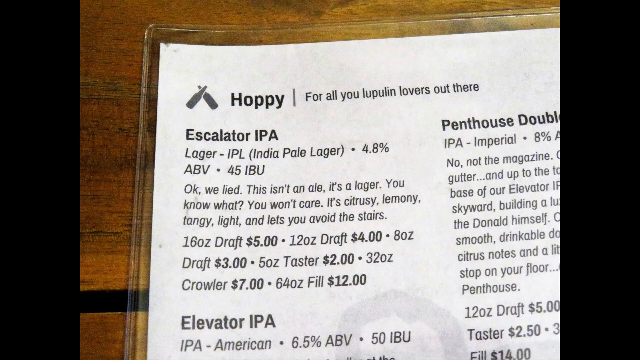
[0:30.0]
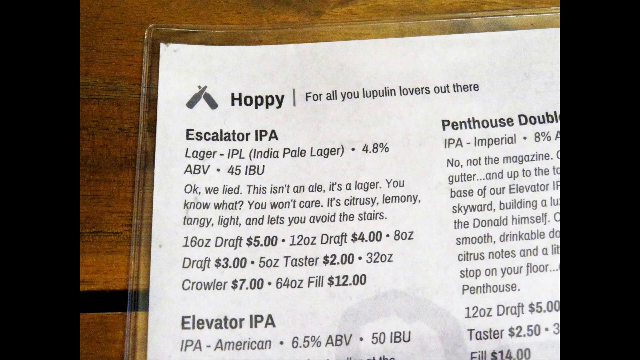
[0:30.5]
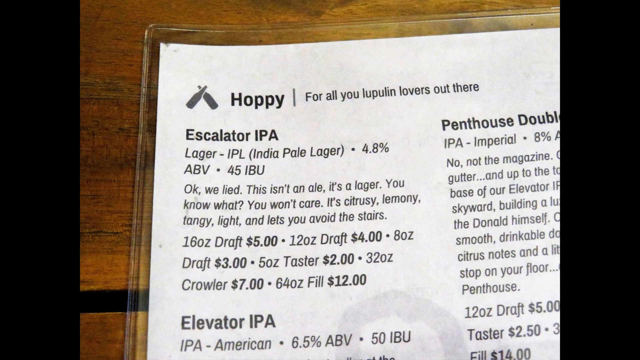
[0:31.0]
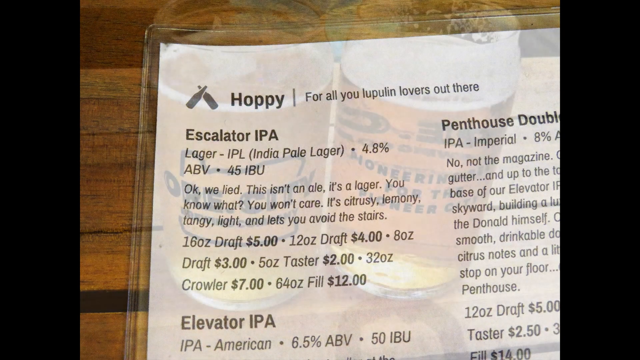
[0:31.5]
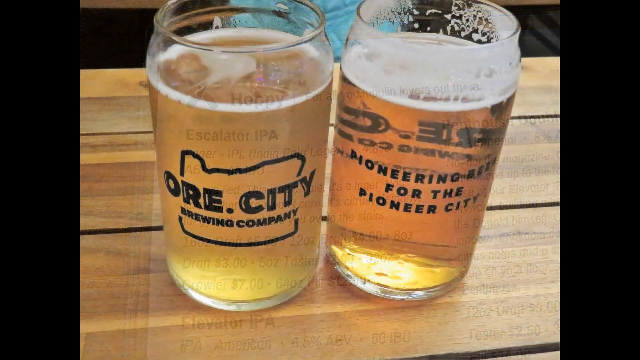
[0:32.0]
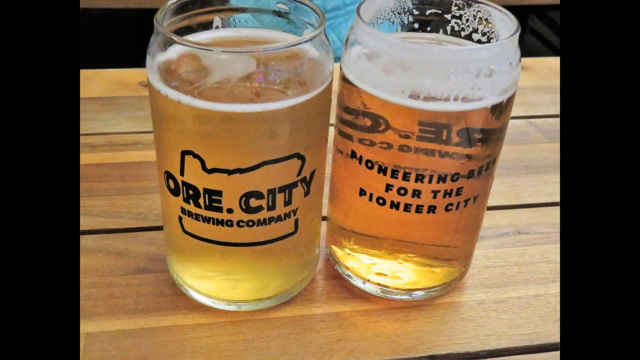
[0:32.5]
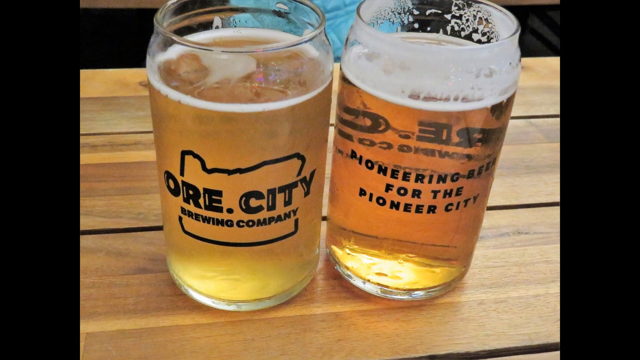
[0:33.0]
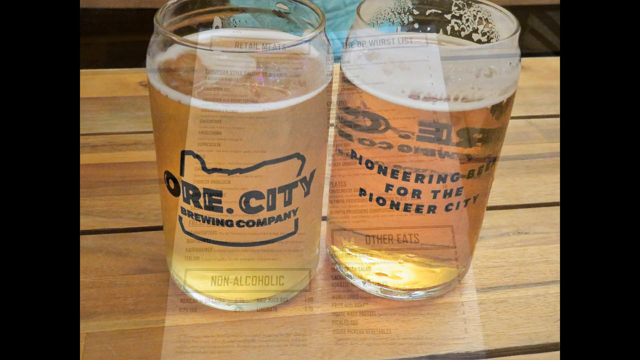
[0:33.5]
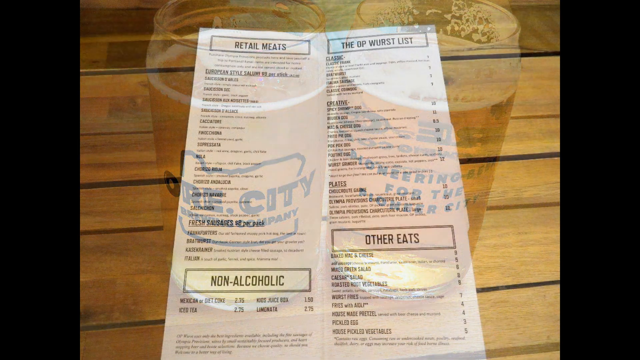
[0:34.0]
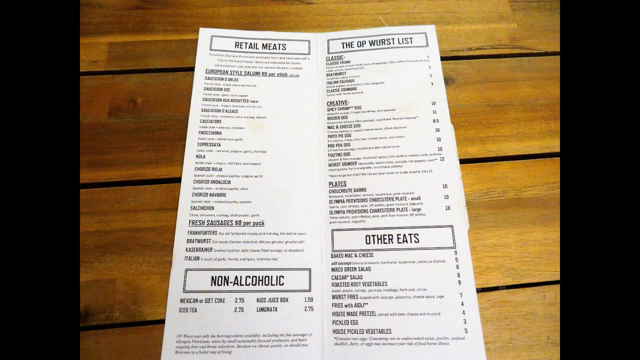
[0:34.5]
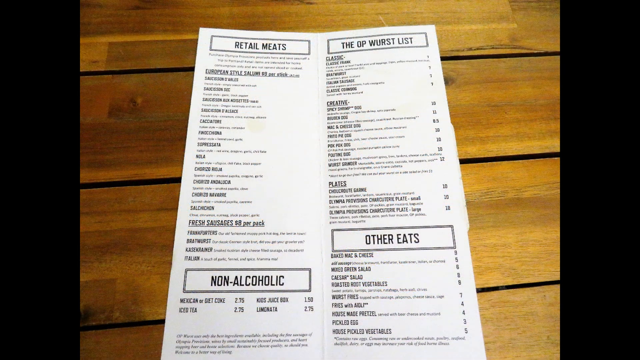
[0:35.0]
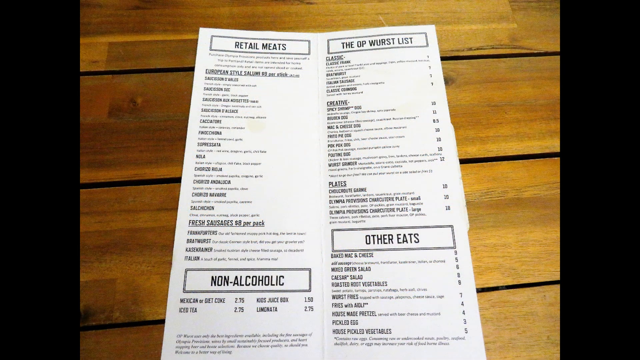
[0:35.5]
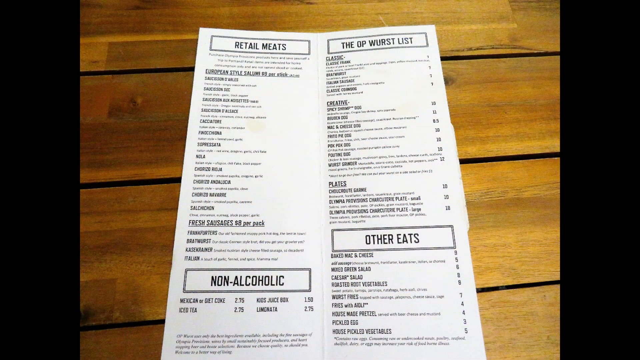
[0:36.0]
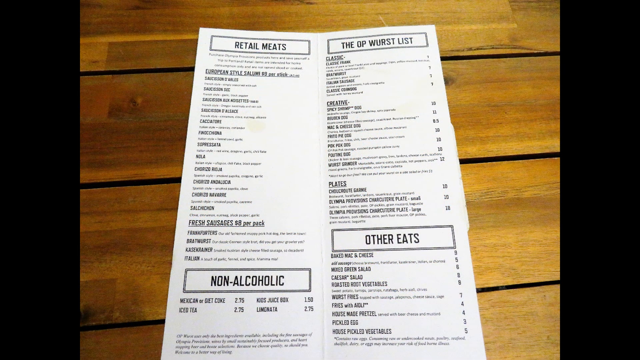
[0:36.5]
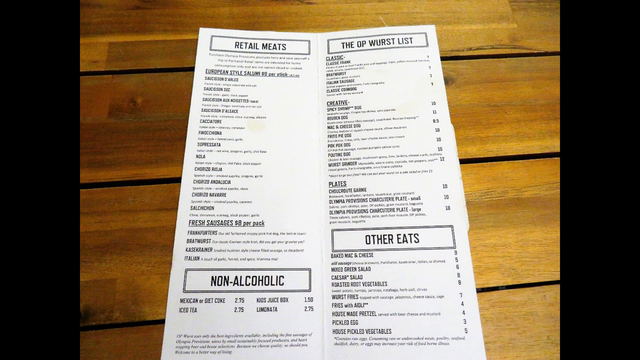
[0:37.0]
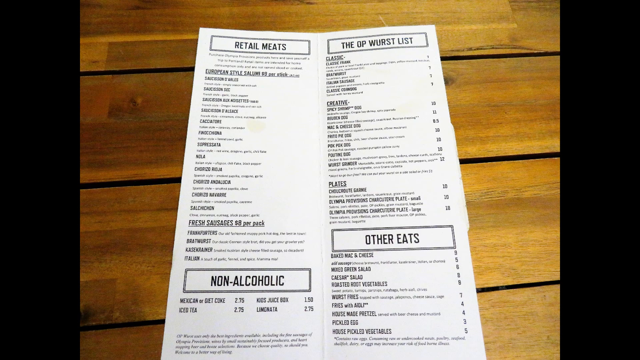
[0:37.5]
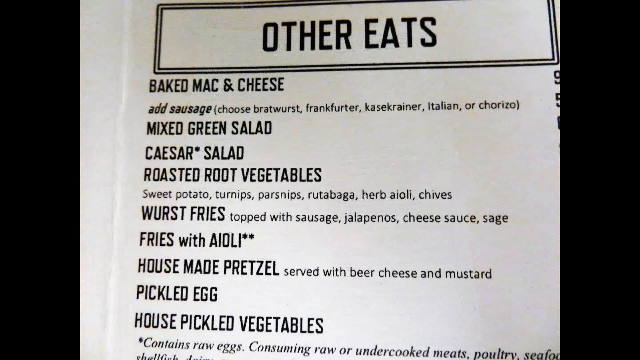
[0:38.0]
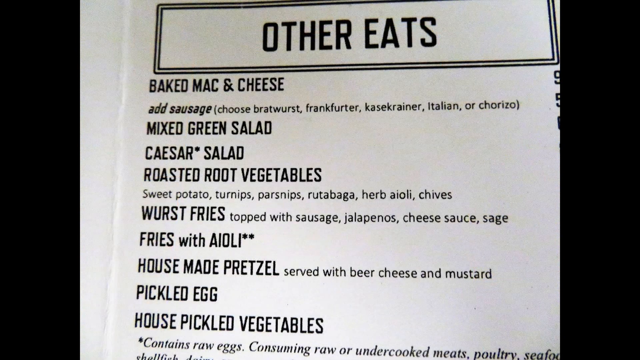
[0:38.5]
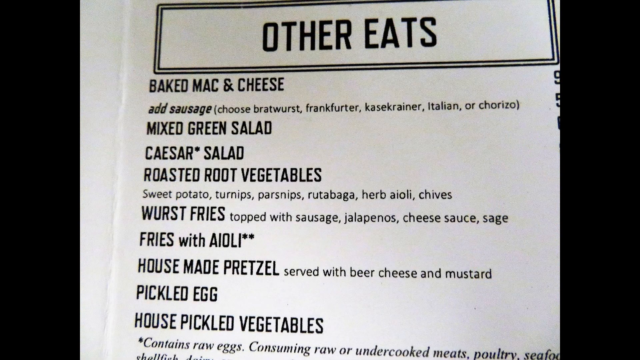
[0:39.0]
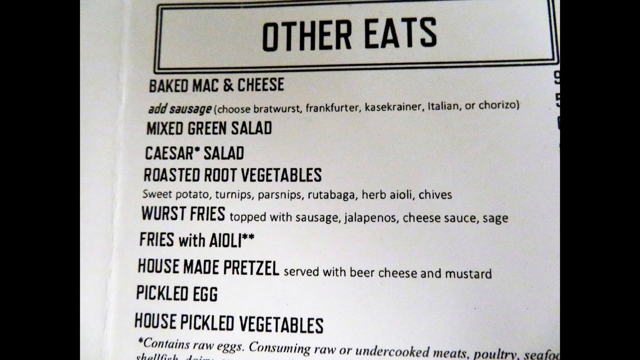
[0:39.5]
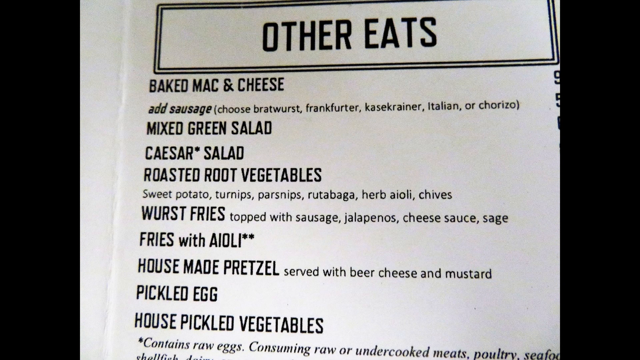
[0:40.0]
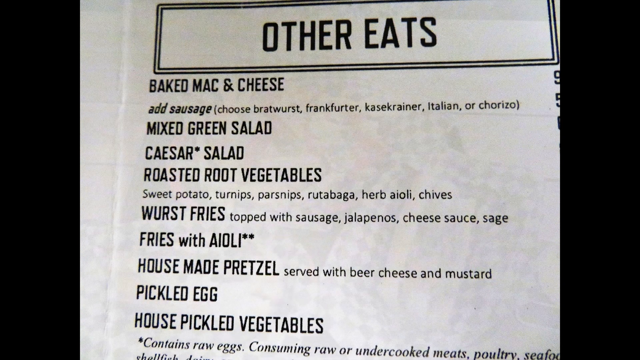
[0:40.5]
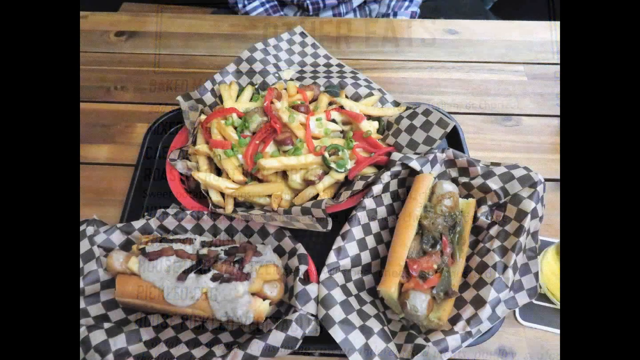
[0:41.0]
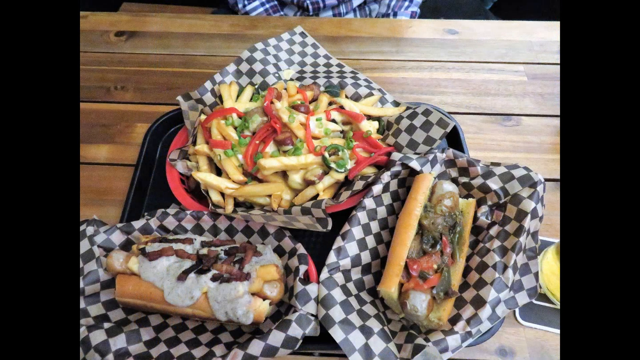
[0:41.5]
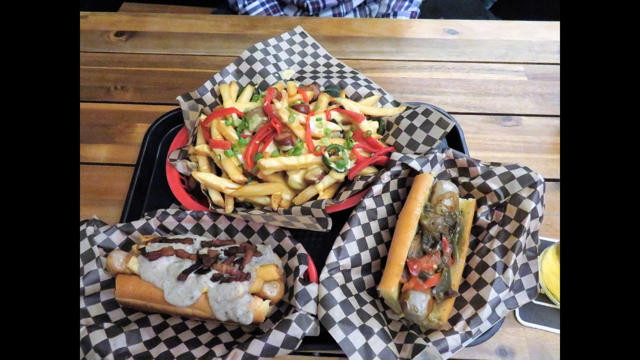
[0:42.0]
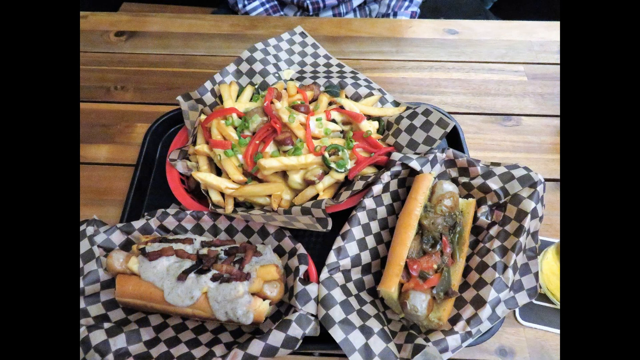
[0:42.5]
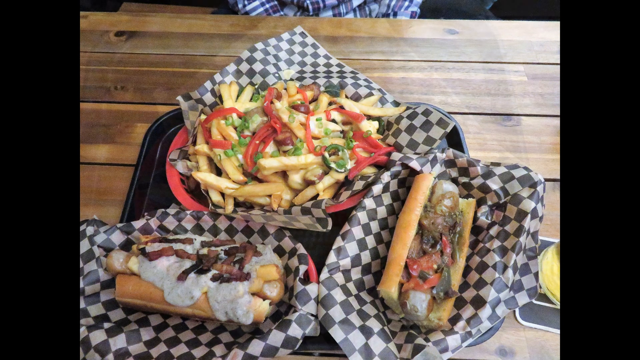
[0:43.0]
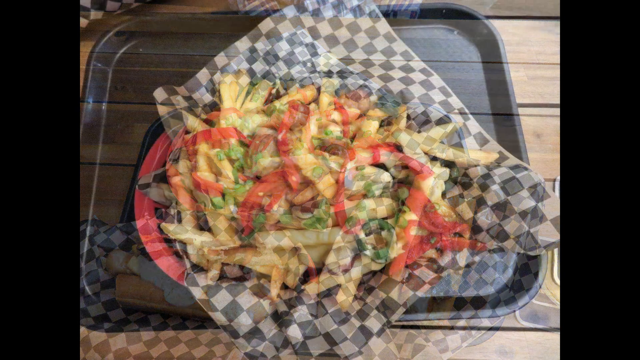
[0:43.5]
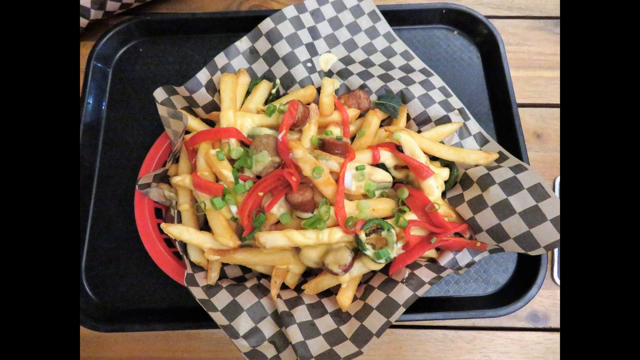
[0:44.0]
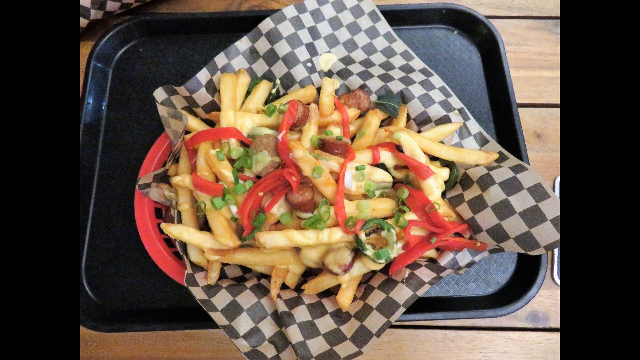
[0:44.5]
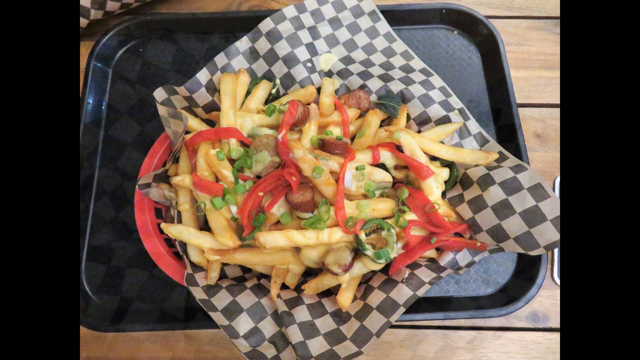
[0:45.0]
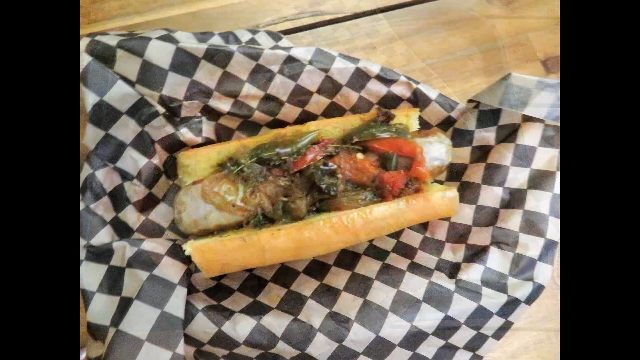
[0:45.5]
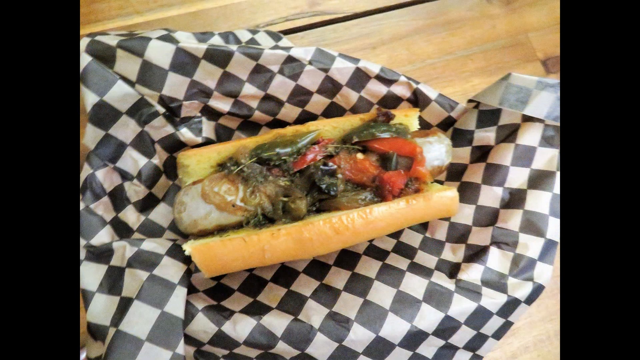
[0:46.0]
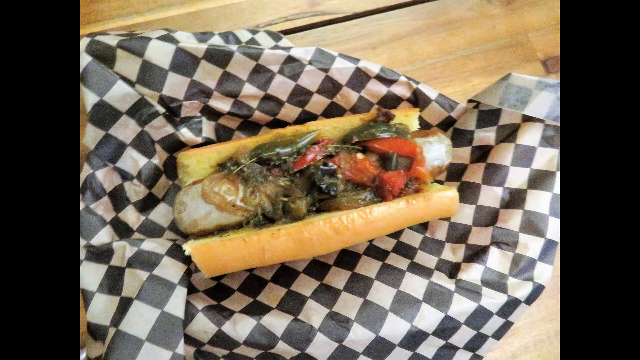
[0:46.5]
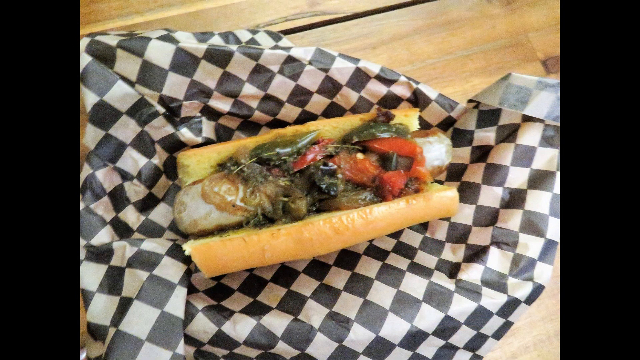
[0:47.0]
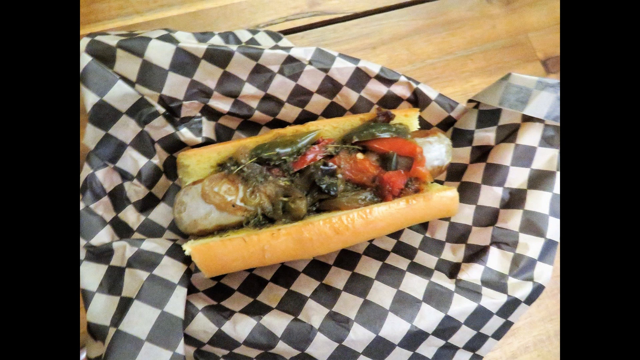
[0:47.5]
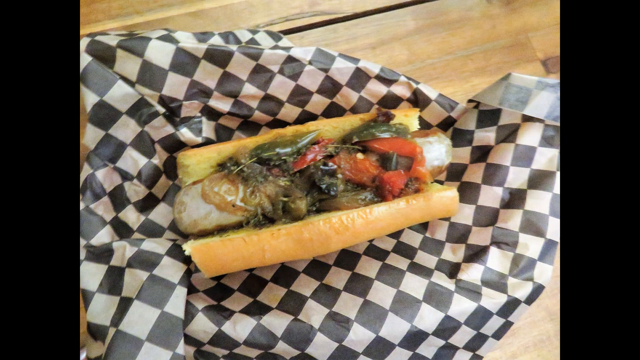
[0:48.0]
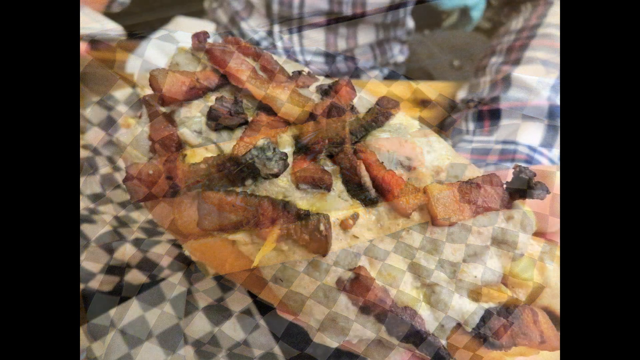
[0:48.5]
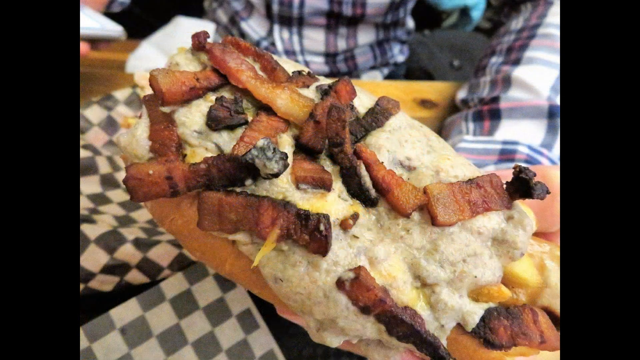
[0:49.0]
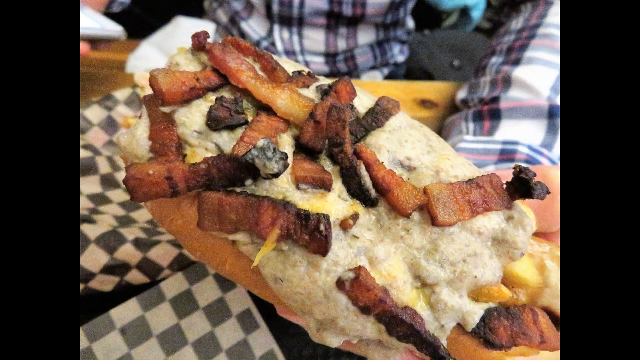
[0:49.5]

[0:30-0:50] Two glasses of beer have "orange" written on them. Food appears next: bagels, hot dogs, nyama and many other items. There are also papers with "happy" written on them, and "baked mac cheese" is written as well.